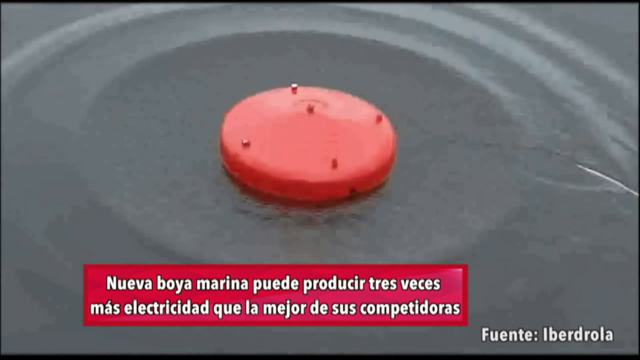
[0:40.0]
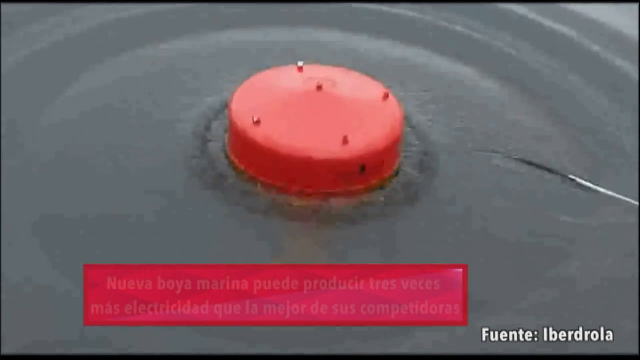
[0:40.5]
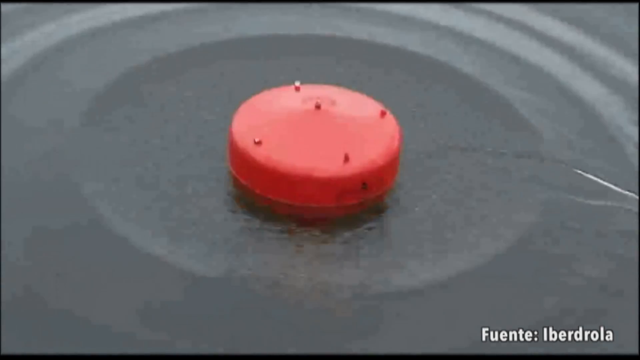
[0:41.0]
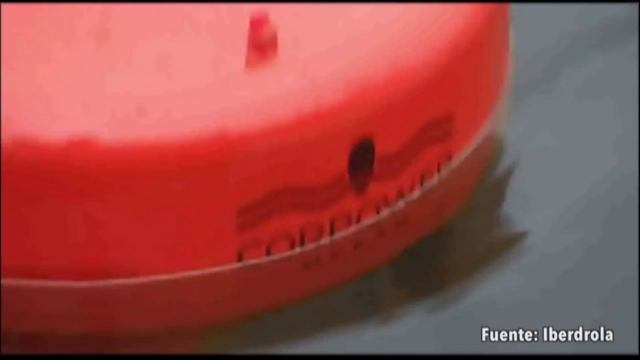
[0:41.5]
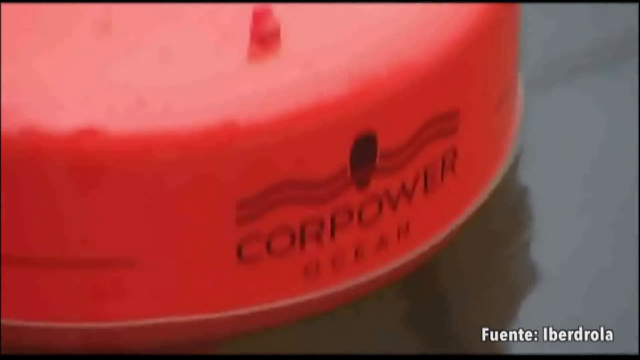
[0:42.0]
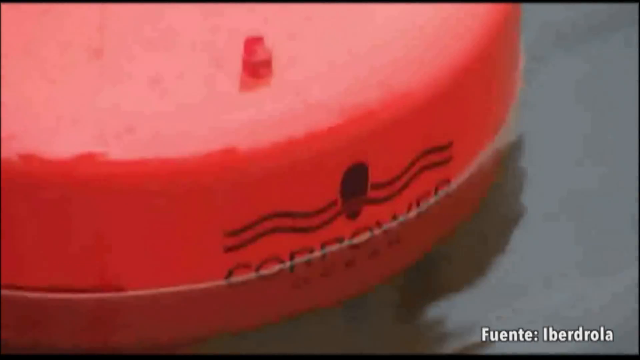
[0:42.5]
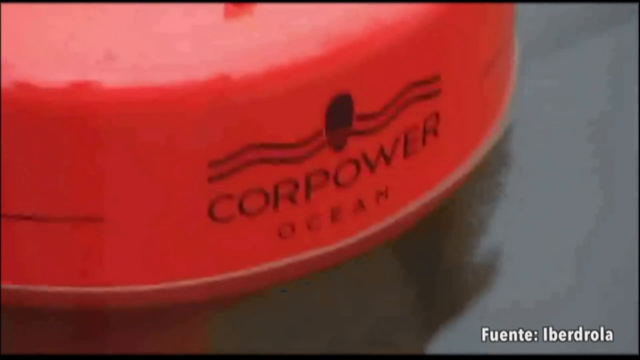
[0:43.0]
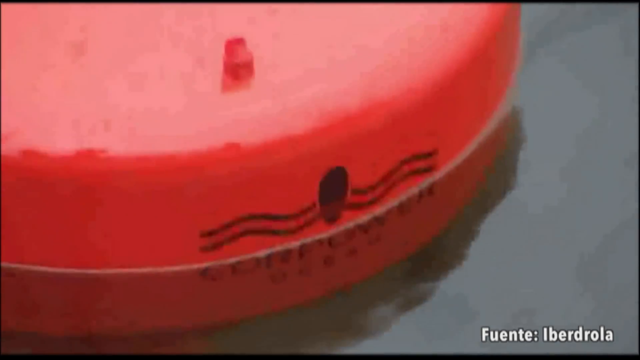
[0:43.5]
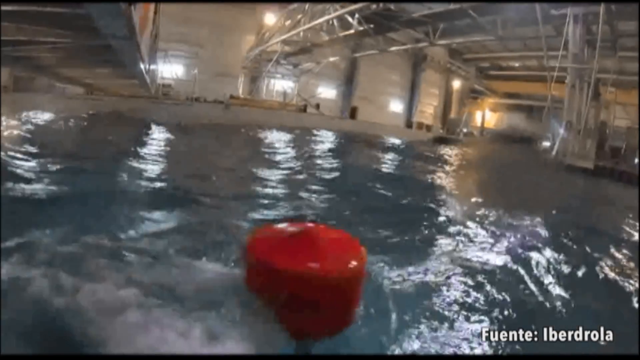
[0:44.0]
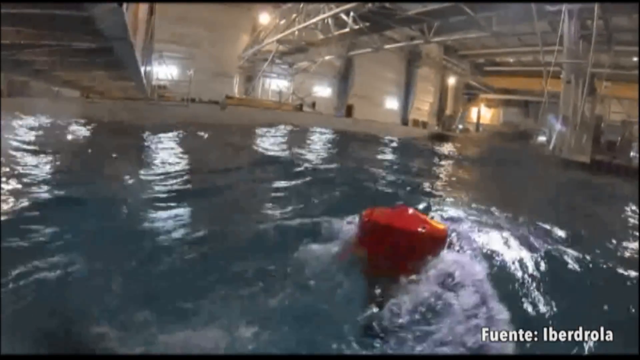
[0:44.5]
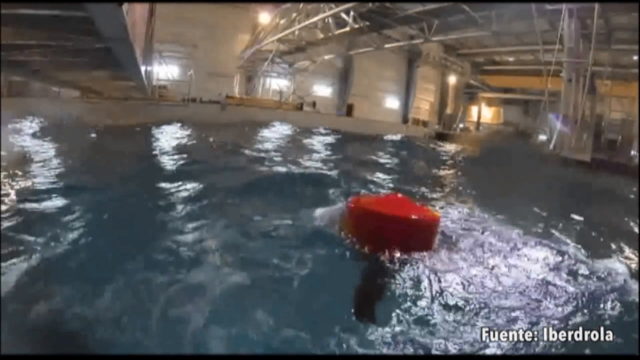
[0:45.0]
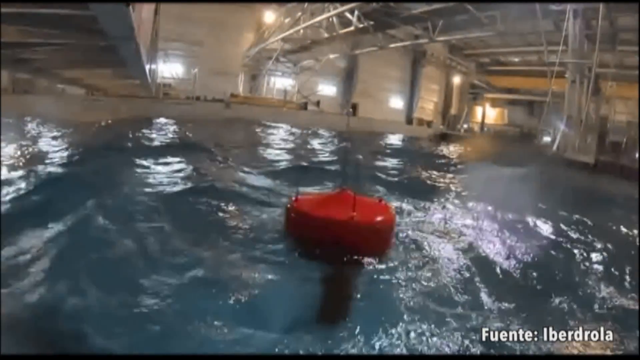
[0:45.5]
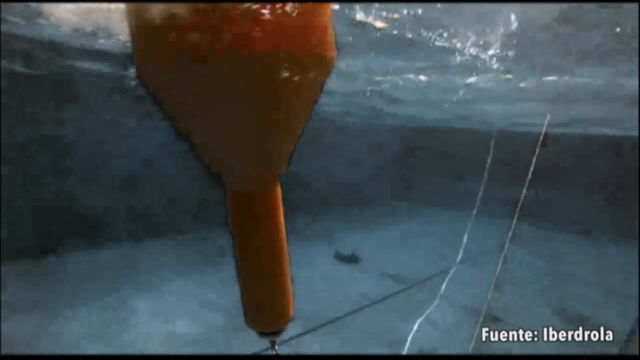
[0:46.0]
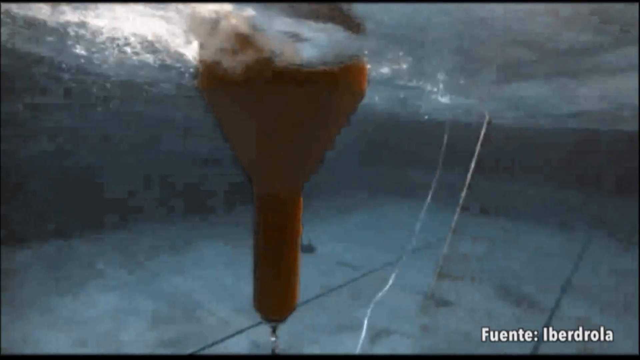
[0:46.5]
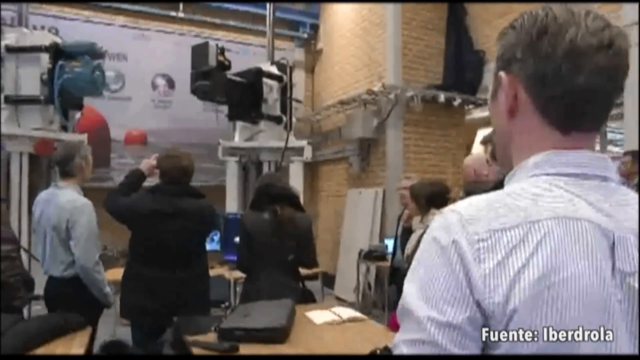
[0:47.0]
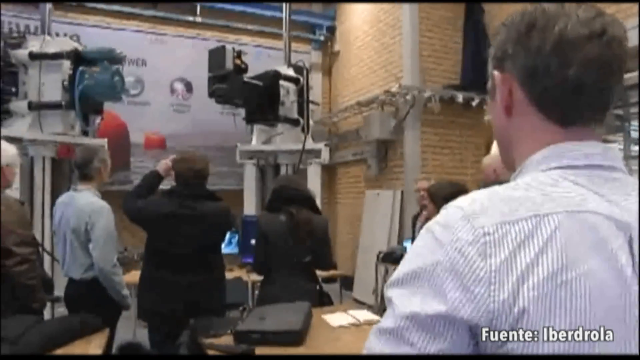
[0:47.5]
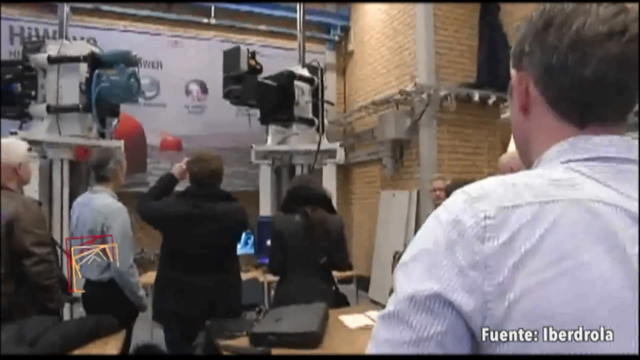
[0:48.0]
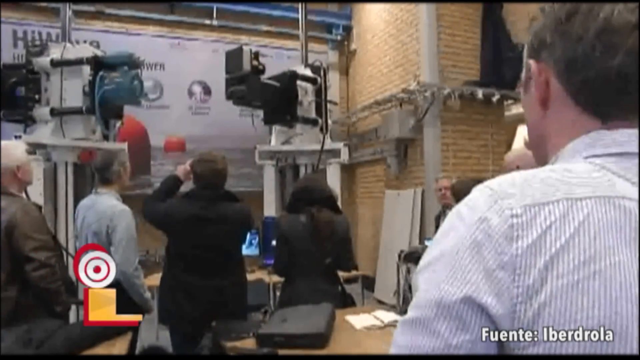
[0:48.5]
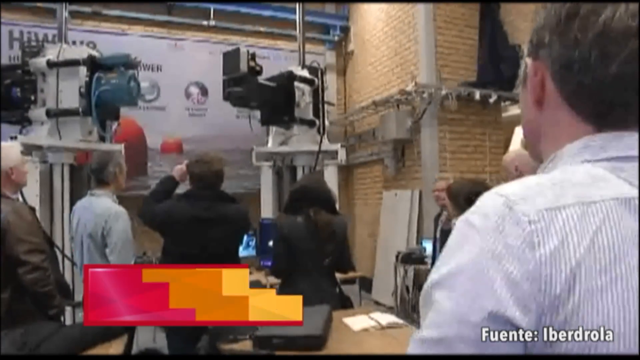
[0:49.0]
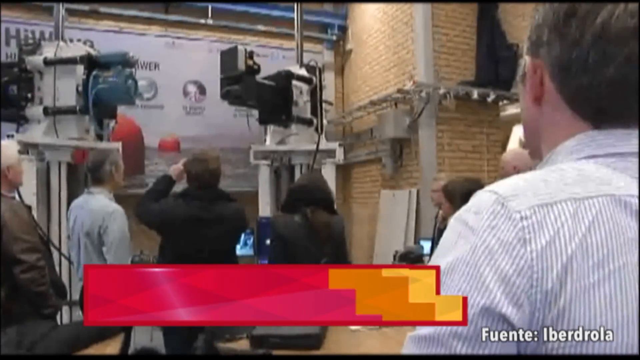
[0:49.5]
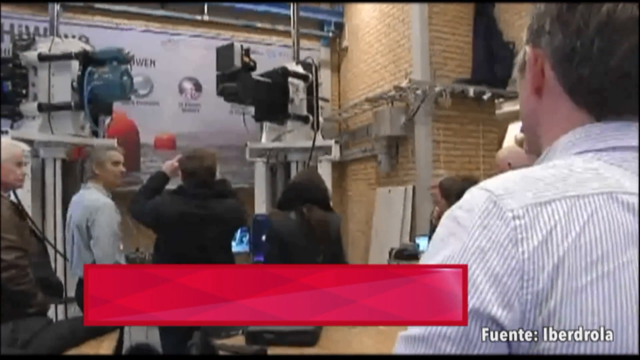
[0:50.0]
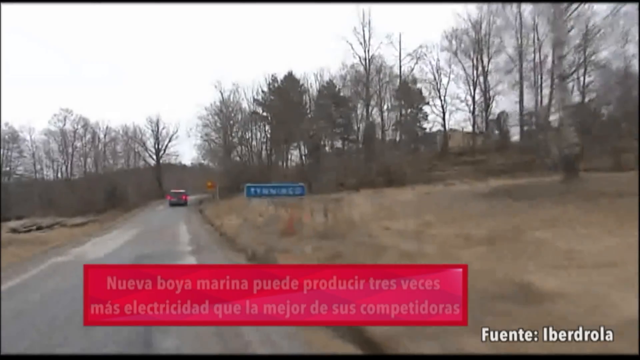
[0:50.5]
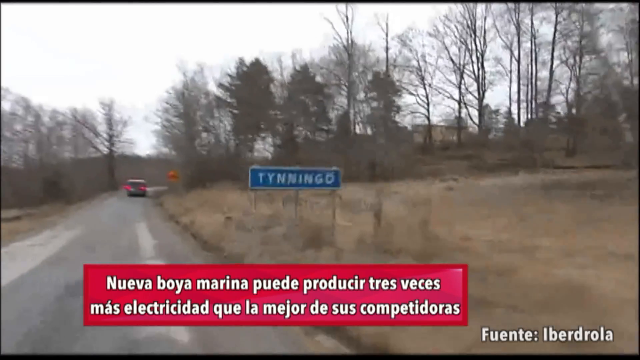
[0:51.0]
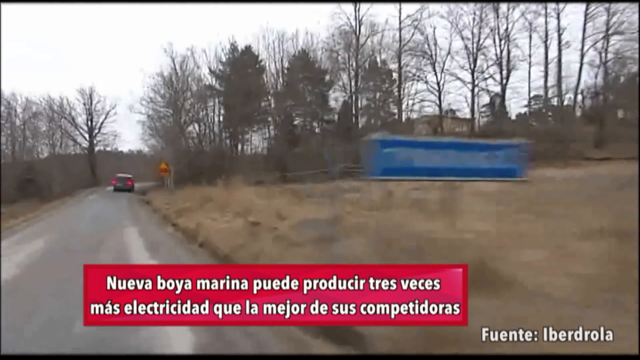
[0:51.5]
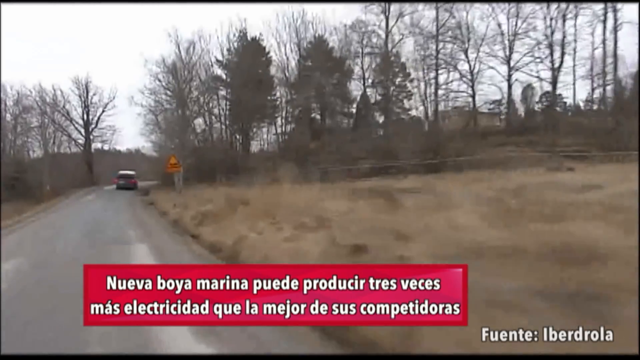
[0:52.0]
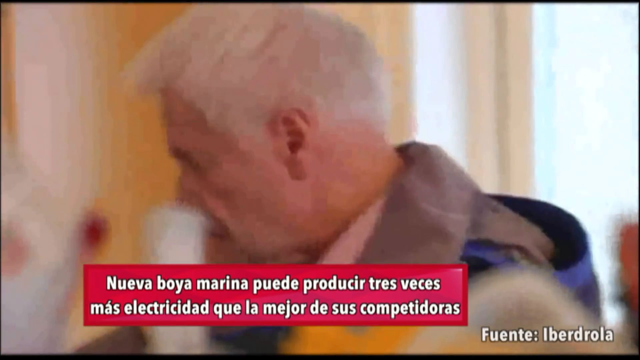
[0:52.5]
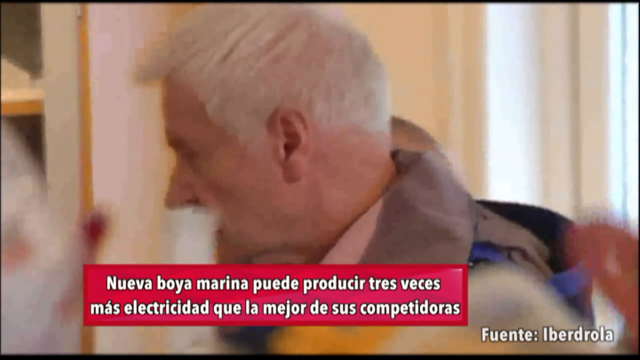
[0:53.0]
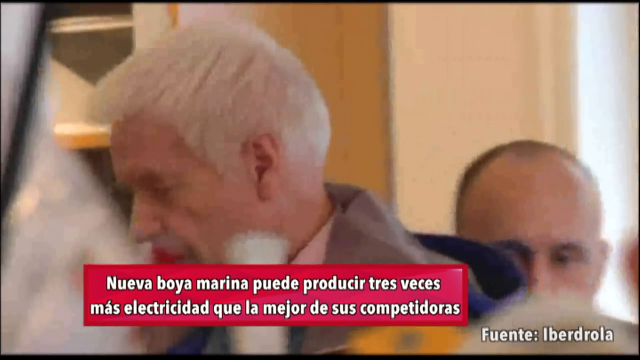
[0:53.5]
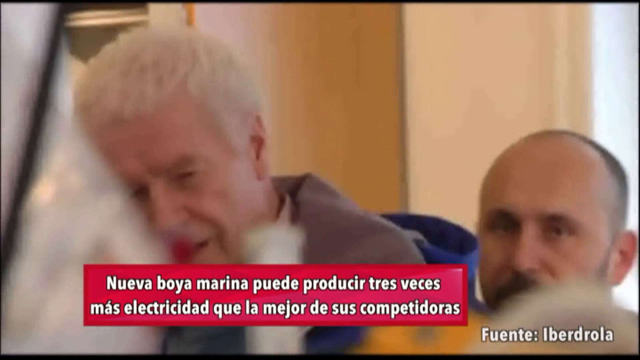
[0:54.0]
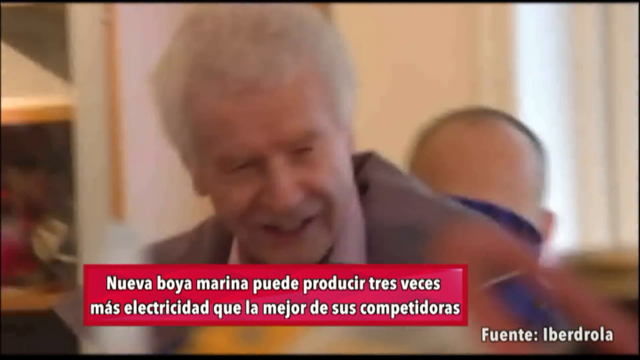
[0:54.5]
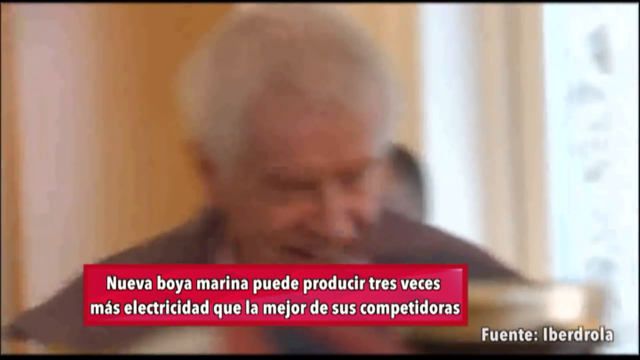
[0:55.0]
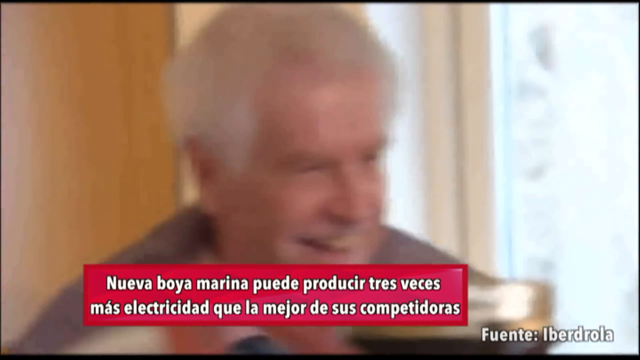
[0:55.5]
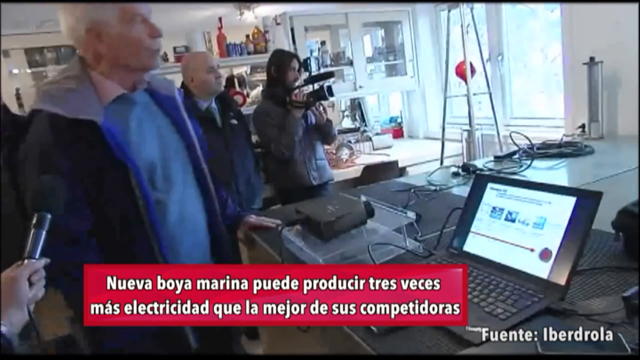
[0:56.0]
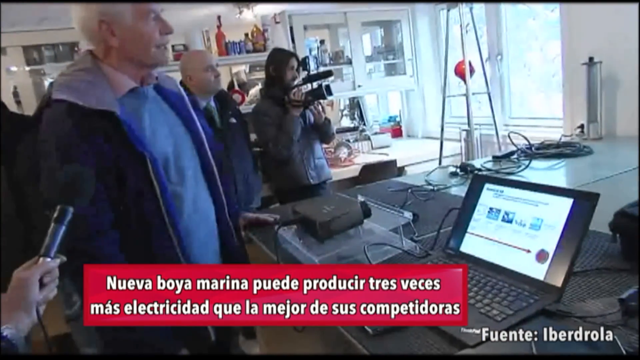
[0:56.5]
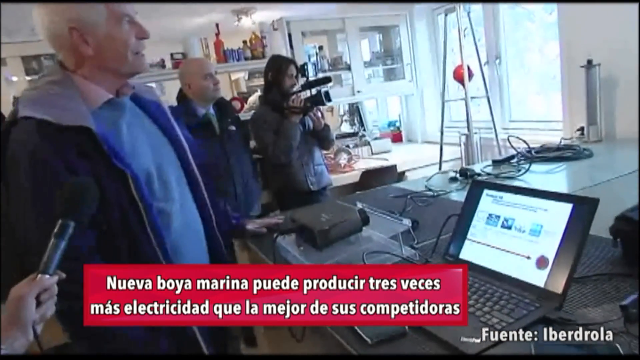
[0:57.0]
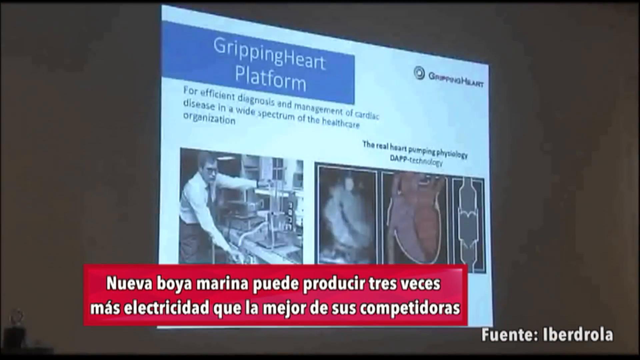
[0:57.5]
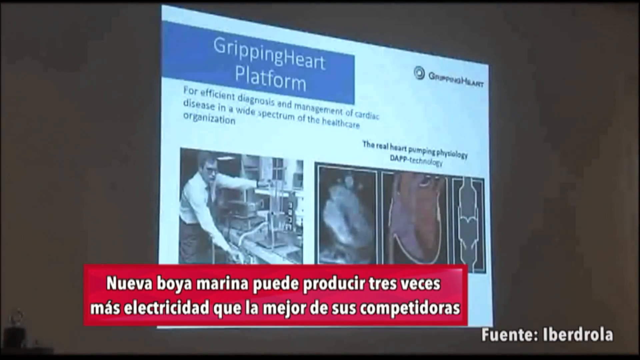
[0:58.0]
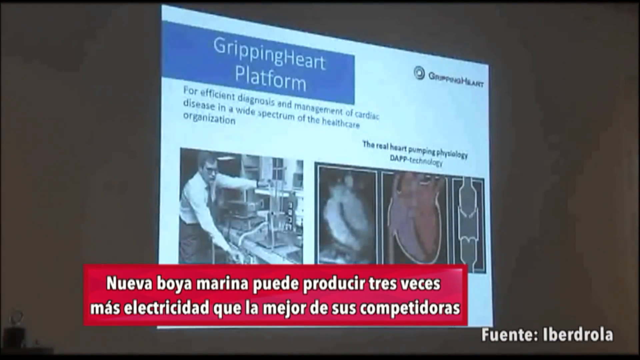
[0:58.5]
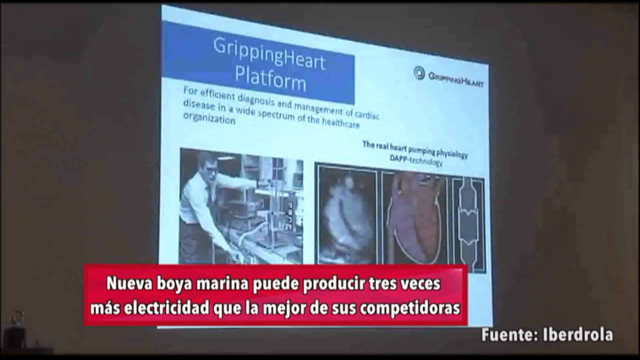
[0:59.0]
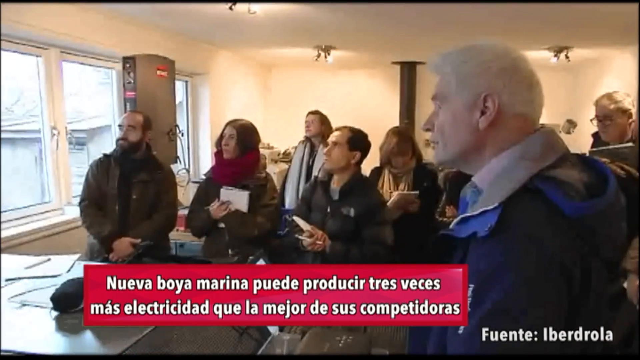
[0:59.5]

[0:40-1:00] The water is clear but the bottom is black, so the water appears black. Circular ripples originate from a container and spread outward. The container is red with some peaks on it; it moves around in the water, going in and out, and as it comes out it reveals the word "CORPOWER" as its label. A reflection of the container is visible in the water. The water is contained in a room with rails, ropes and lighting. A yellow balloon is in the water, suspended by the water pressure, and because the water is clear the balloon can be seen through it. The scene then moves to an industrial area with many cameras; the first camera is white. Most of the people in this room are white people with black hair, and one reporter wears a white shirt with blue stripes. They are recording something that has been invented.